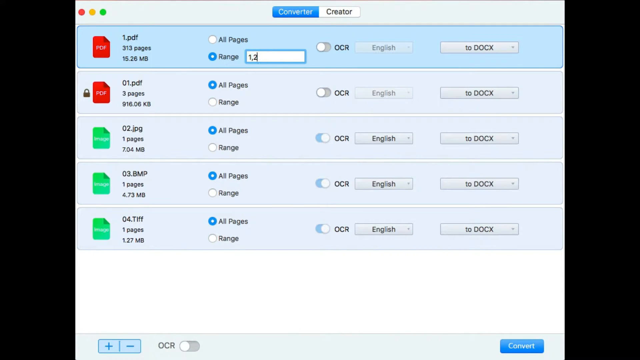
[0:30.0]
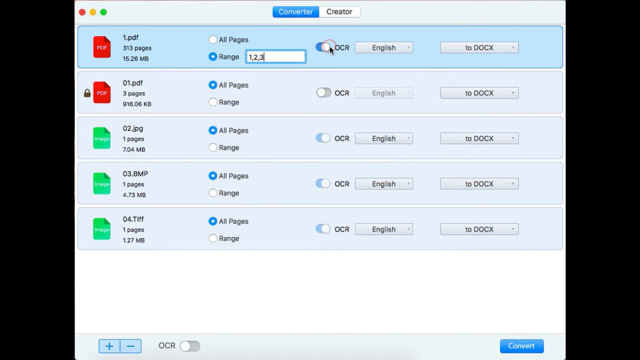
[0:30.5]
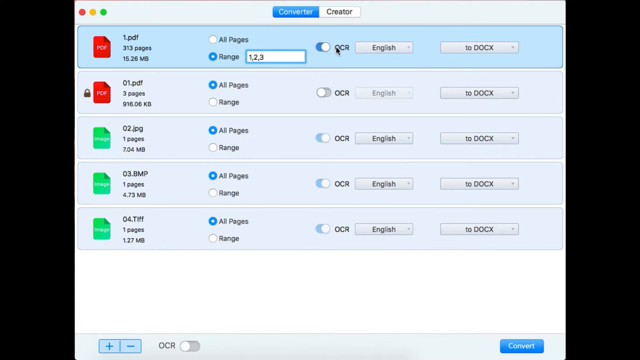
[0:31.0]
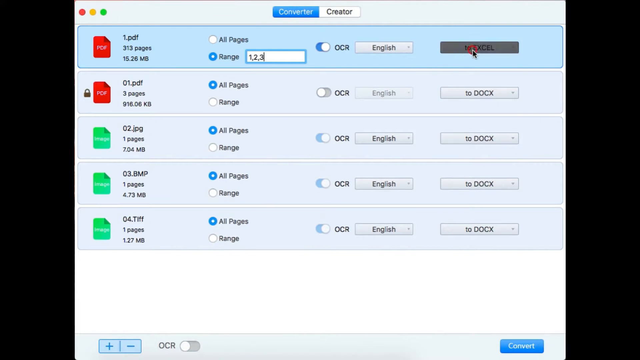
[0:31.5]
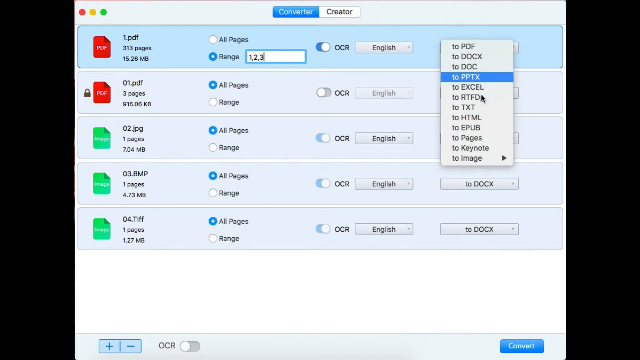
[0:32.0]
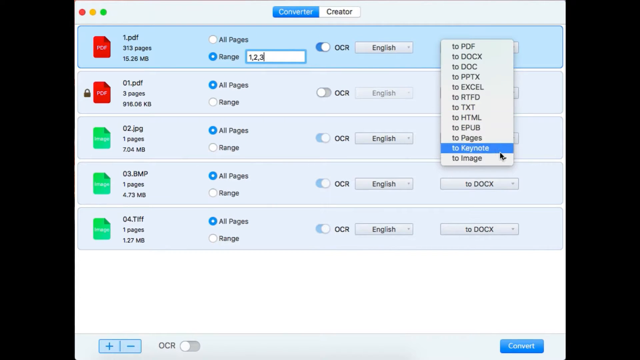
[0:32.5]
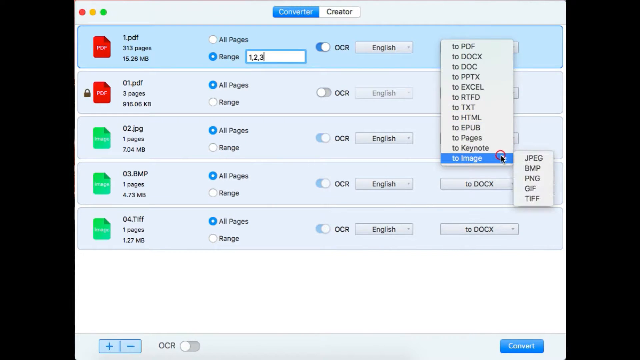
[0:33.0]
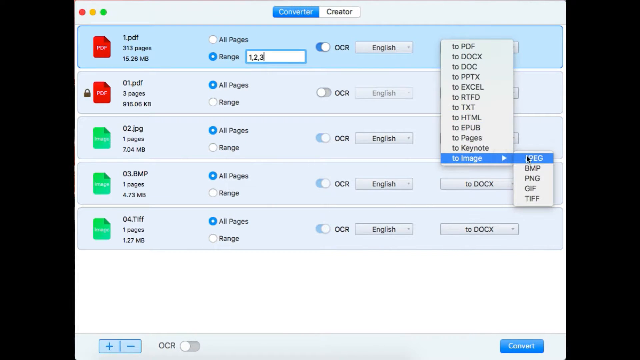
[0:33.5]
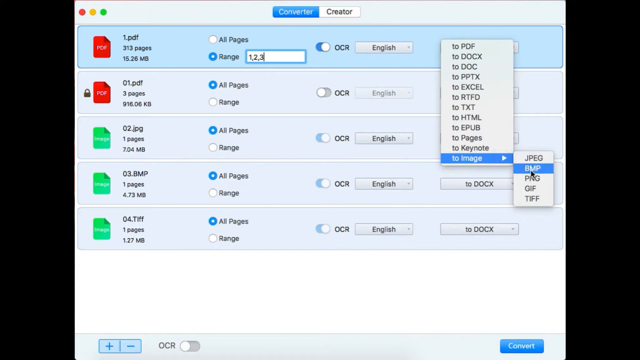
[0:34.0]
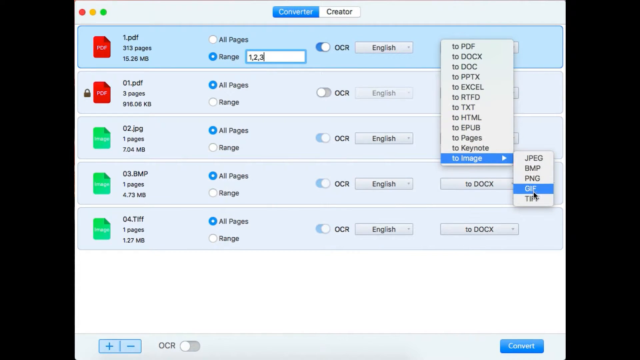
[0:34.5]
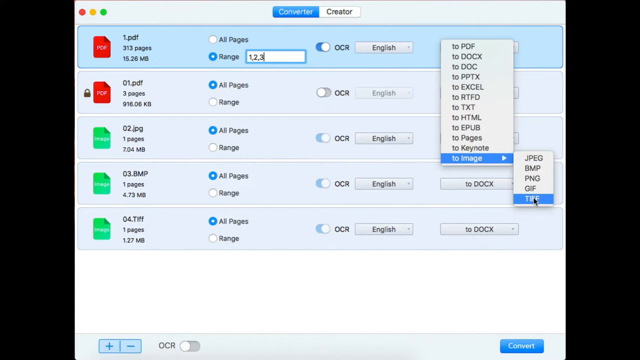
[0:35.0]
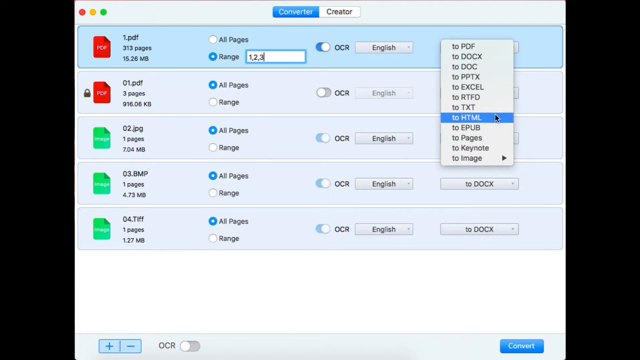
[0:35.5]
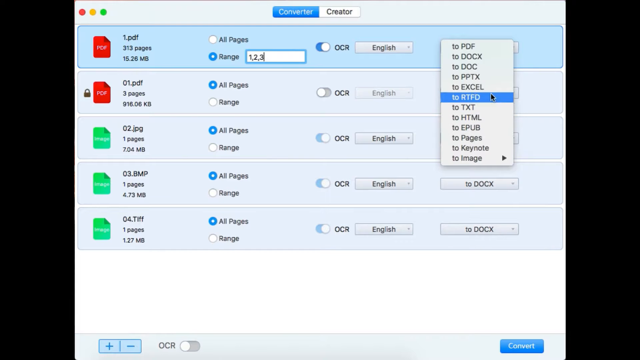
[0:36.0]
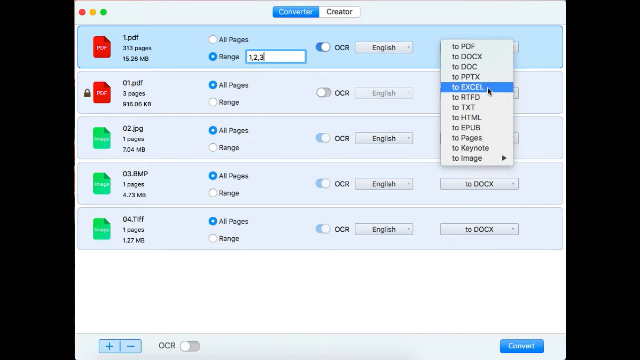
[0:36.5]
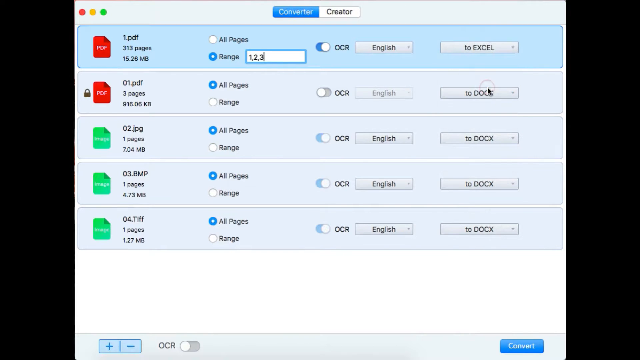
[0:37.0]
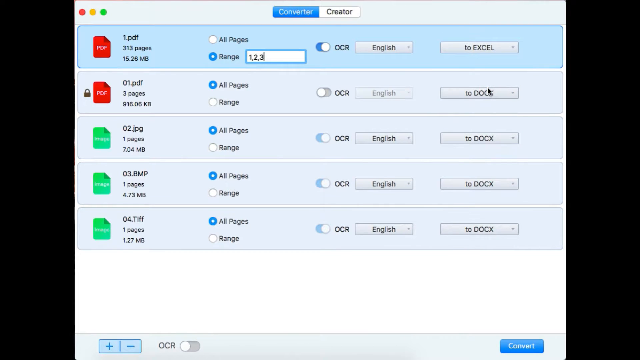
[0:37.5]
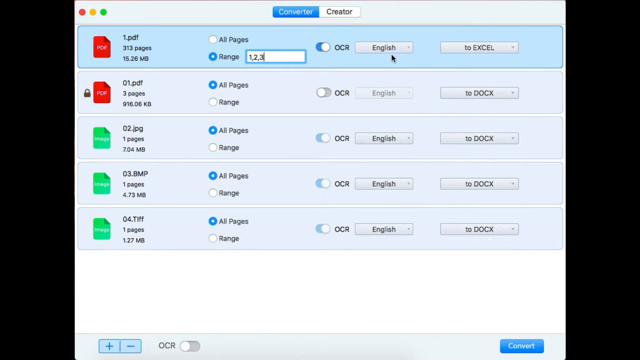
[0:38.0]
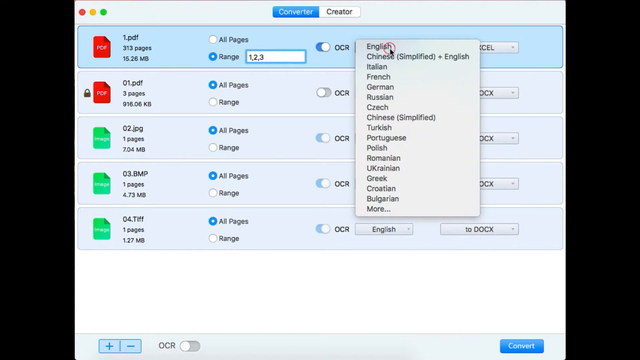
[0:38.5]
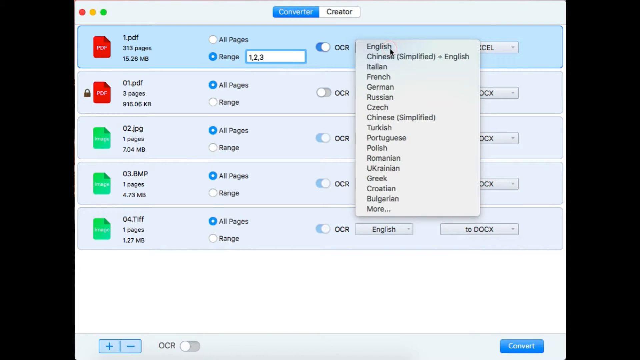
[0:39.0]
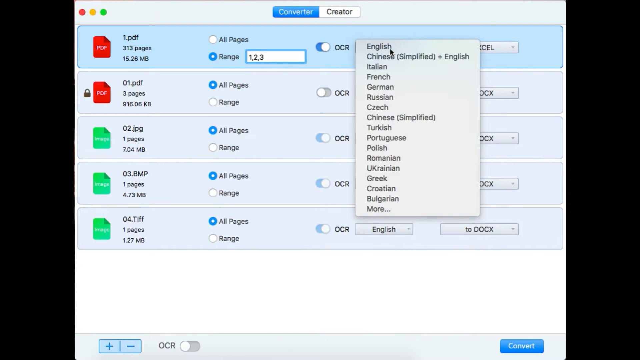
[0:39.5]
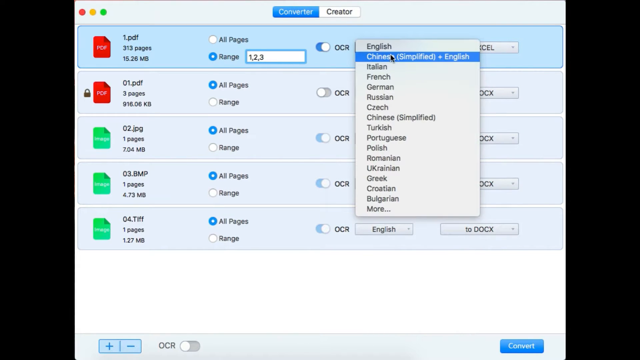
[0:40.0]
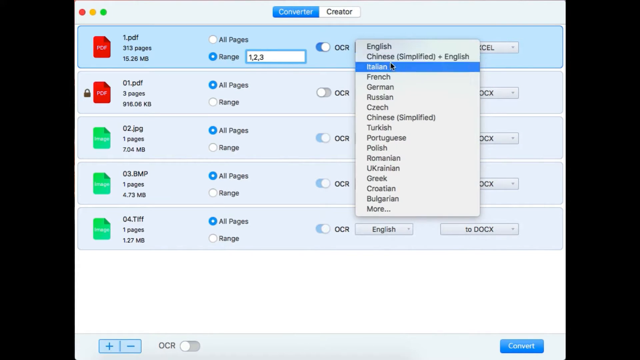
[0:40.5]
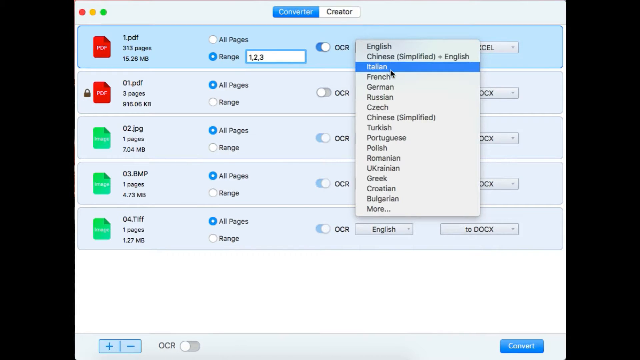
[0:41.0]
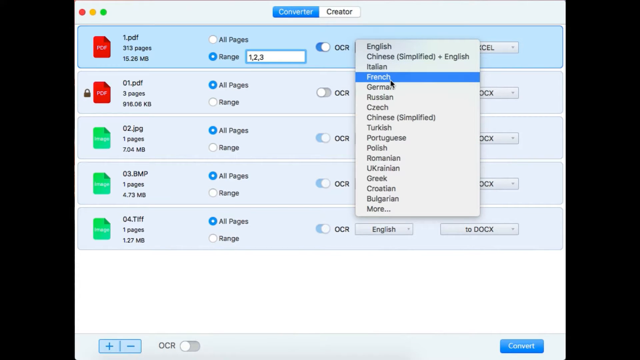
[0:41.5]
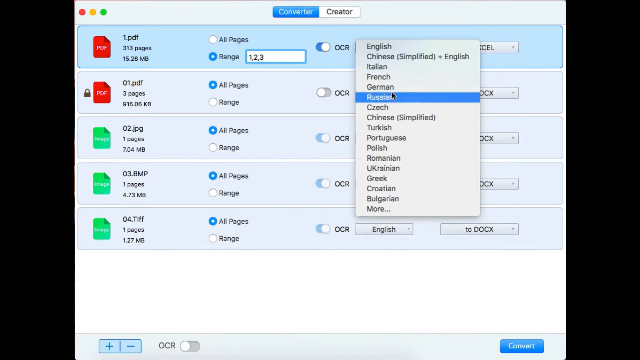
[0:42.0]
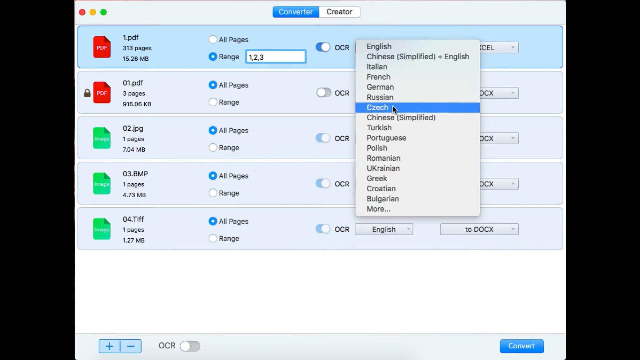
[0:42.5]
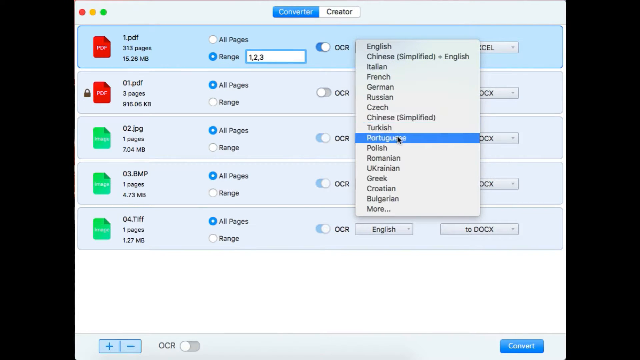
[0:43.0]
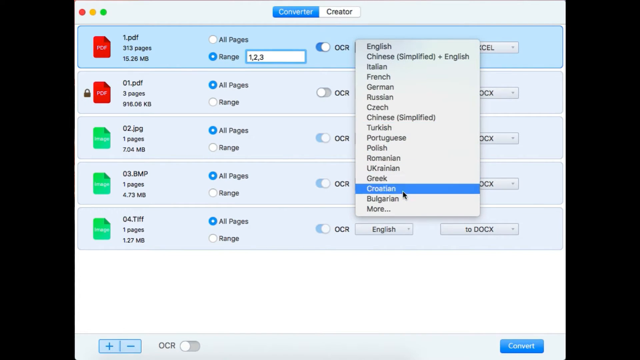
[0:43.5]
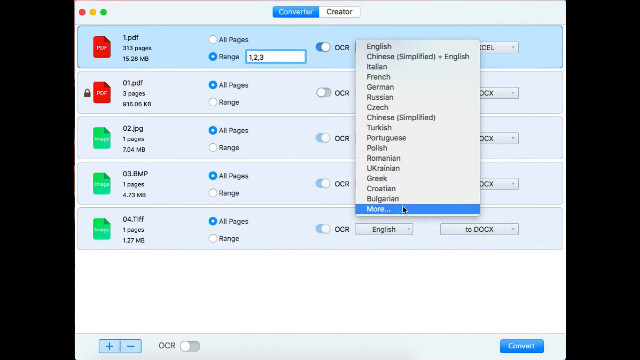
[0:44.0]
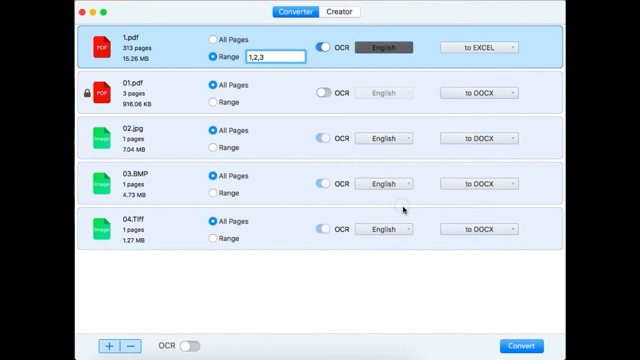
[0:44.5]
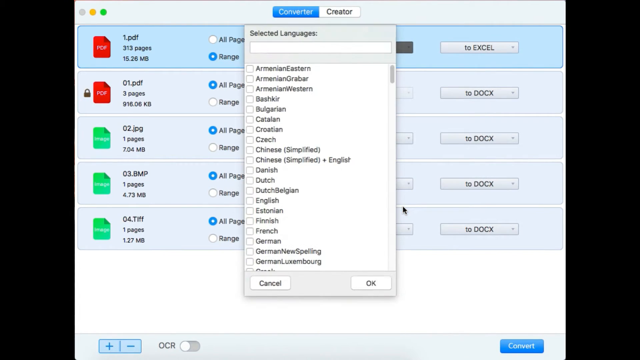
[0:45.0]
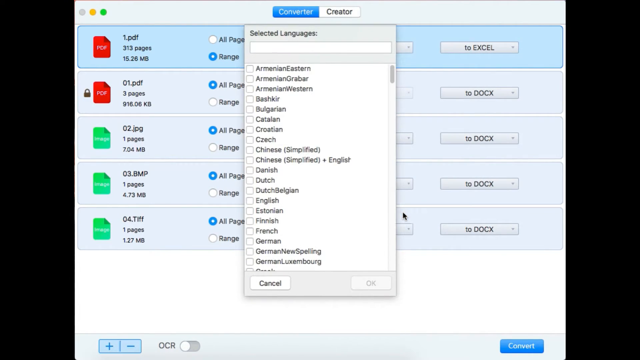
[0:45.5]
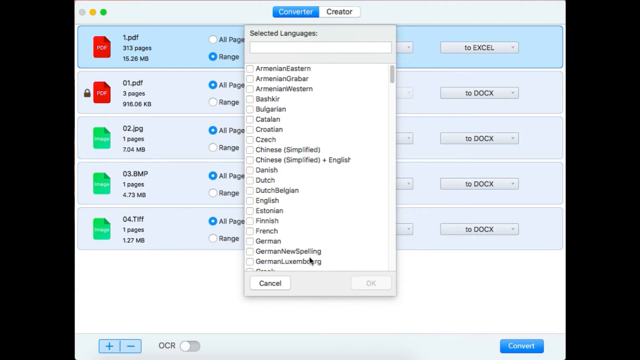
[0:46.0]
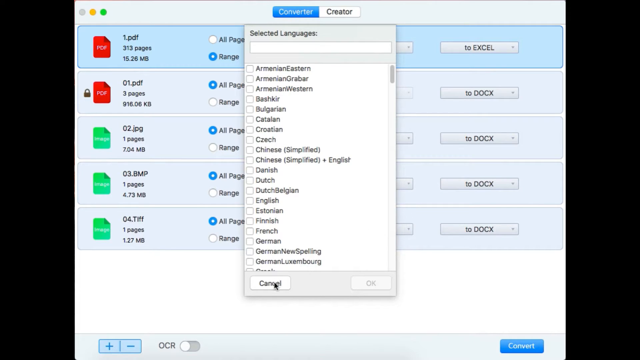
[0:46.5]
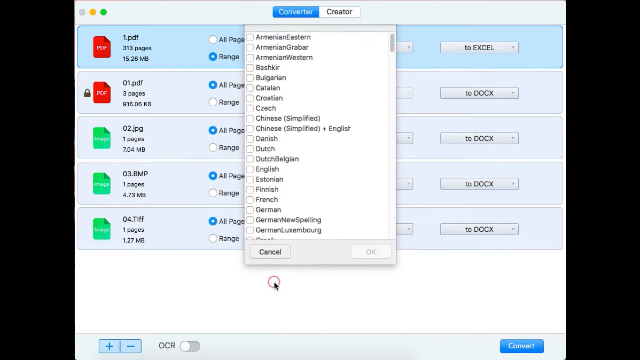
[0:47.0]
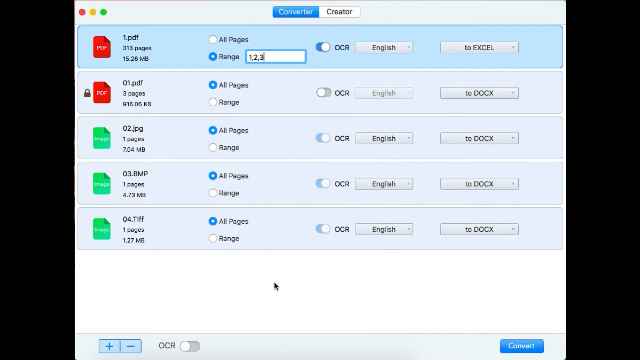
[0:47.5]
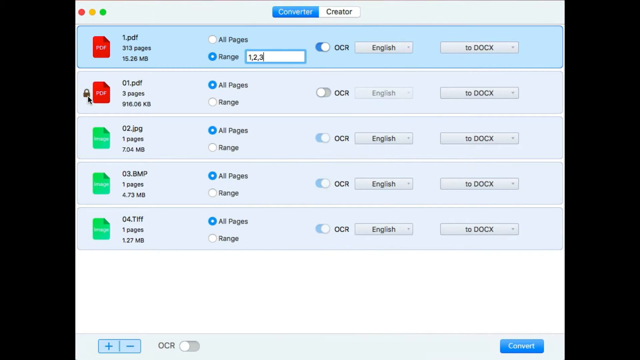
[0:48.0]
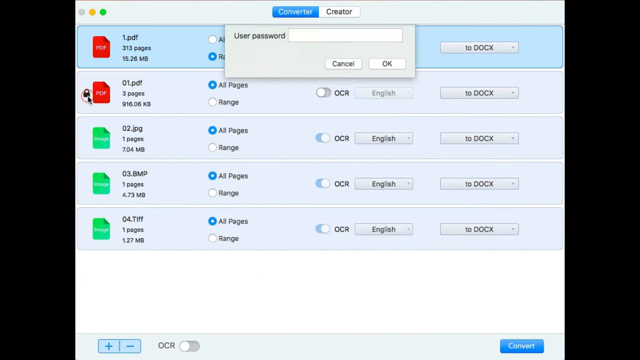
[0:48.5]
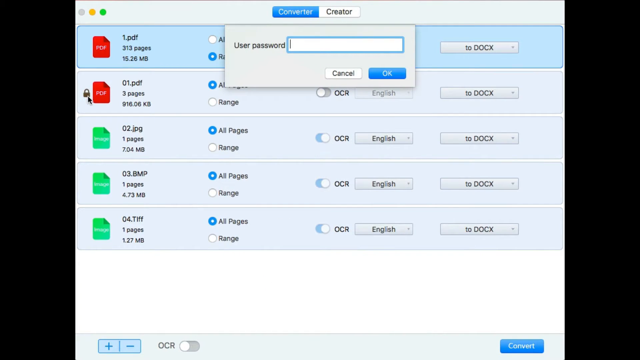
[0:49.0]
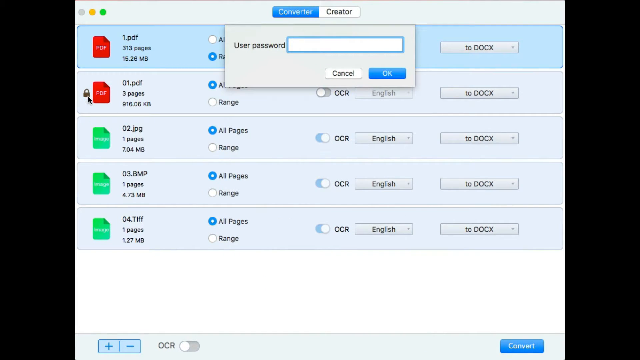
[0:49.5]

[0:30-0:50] On the converter window, the settings of the first file, 1.pdf, are being modified. The range column has been changed from all pages to a range, with 1, 2, 3 entered in the text box. The OCR toggle in the next column, previously off, is now turned on. The last column, which was DOCX, is opened and its options, such as Keynote or image, are looked at, and it is finally changed to Excel. The language drop-down then shows the different languages, including English, Chinese and Italian, probably around 12 or 13 in all. The cursor highlights over the different languages and clicks "more" to show that more languages can be selected. Finally, the second PDF file, which has a lock on the far left, is selected; clicking the lock opens a pop-up asking for a password.